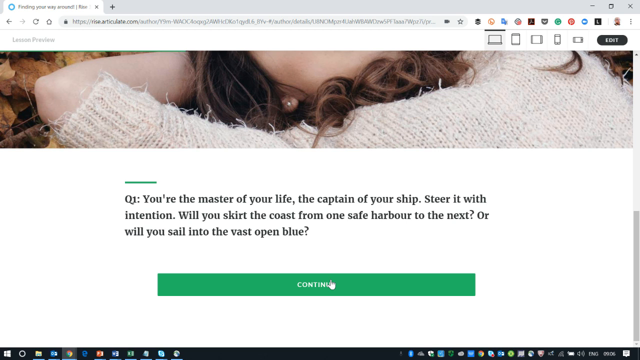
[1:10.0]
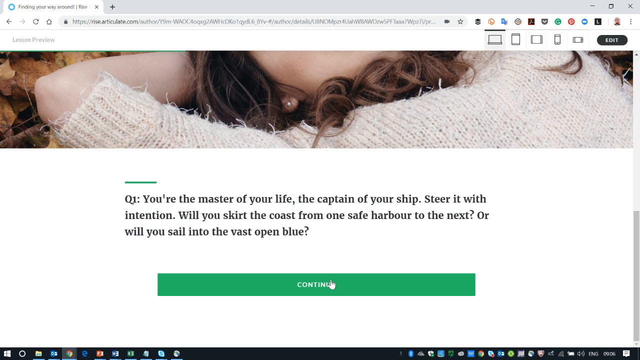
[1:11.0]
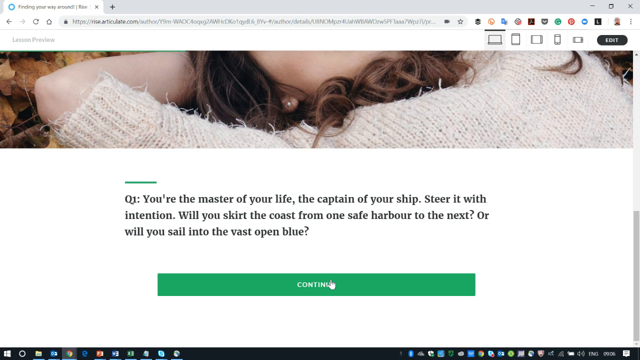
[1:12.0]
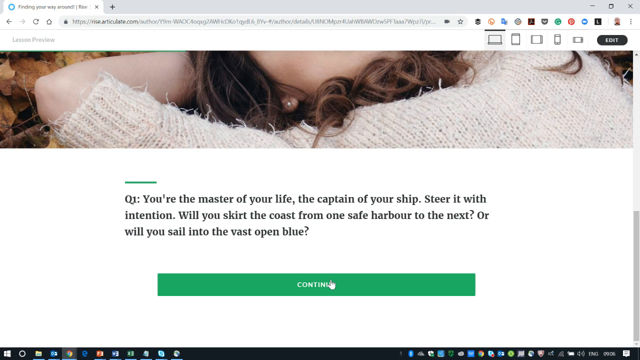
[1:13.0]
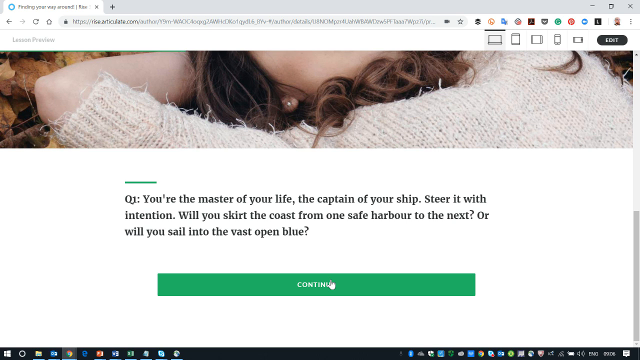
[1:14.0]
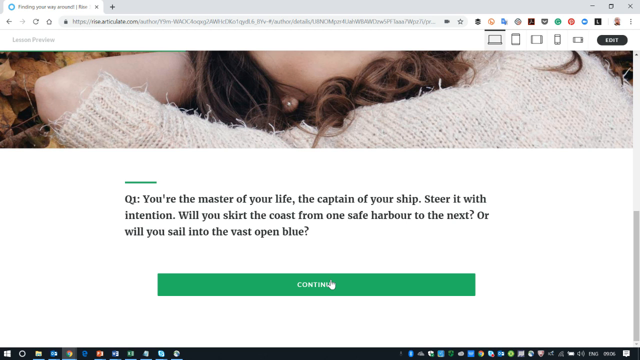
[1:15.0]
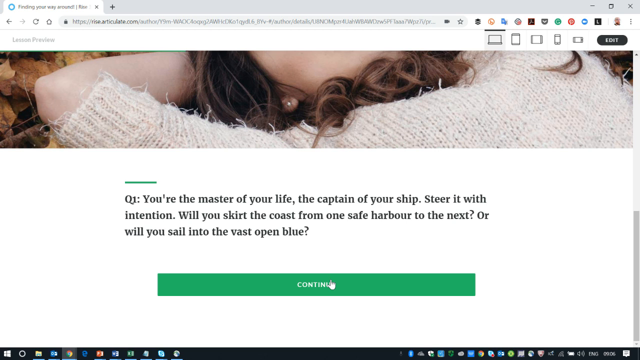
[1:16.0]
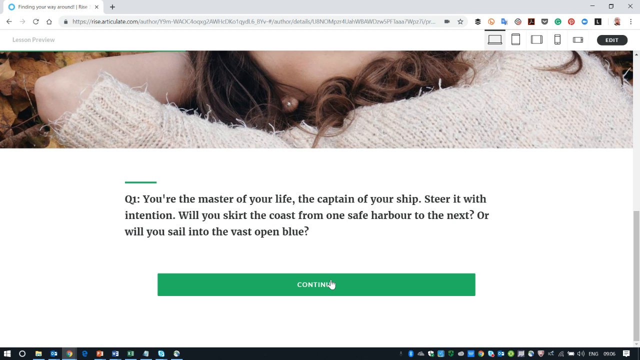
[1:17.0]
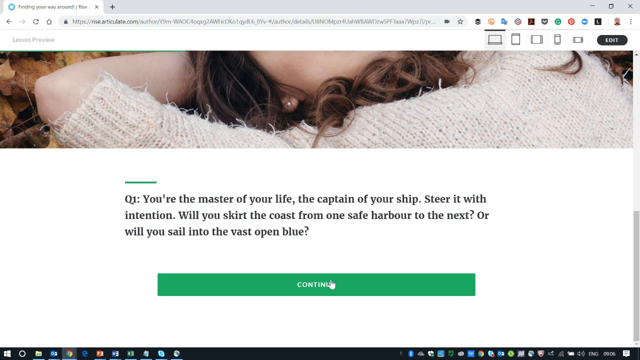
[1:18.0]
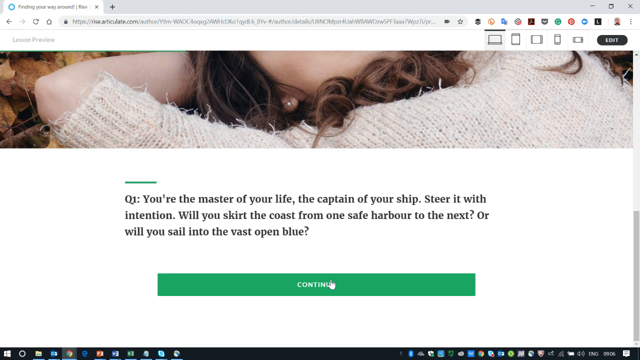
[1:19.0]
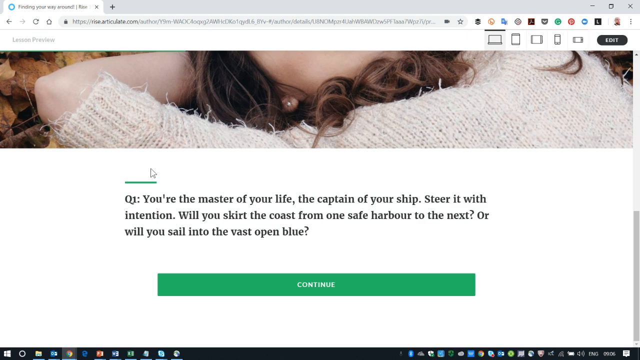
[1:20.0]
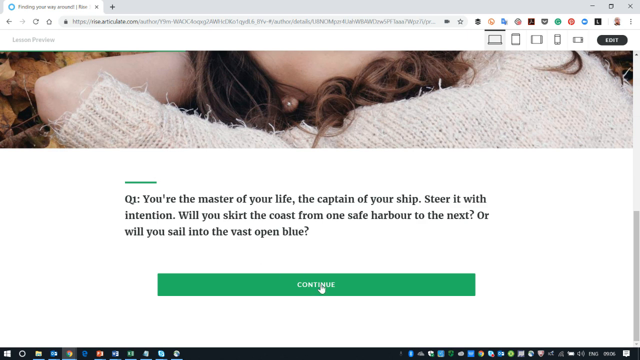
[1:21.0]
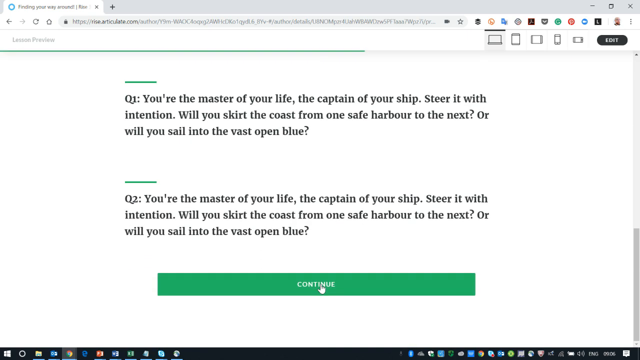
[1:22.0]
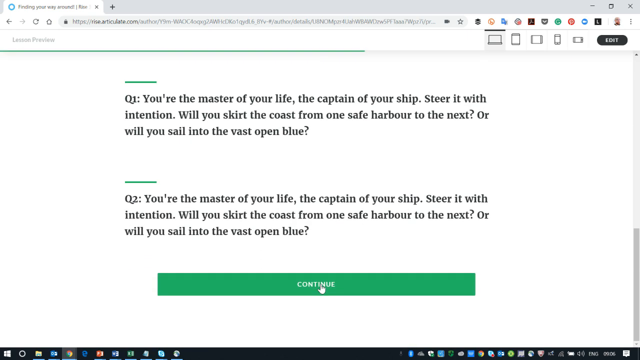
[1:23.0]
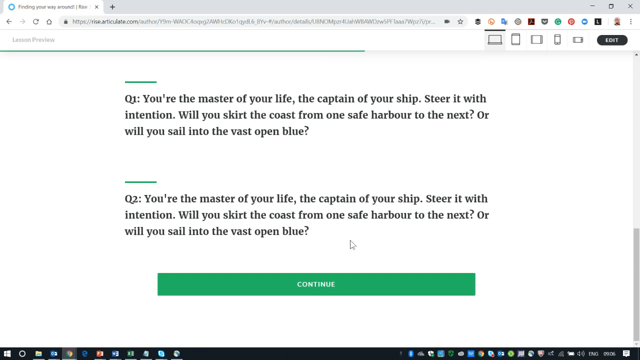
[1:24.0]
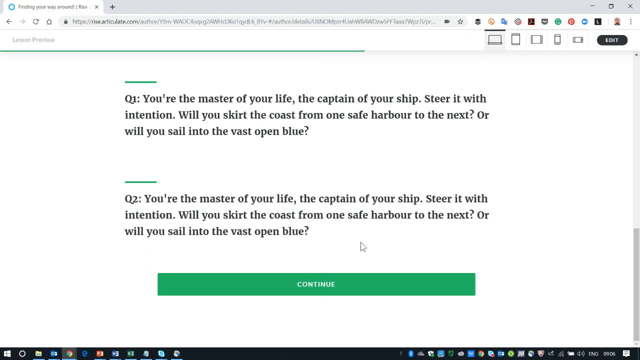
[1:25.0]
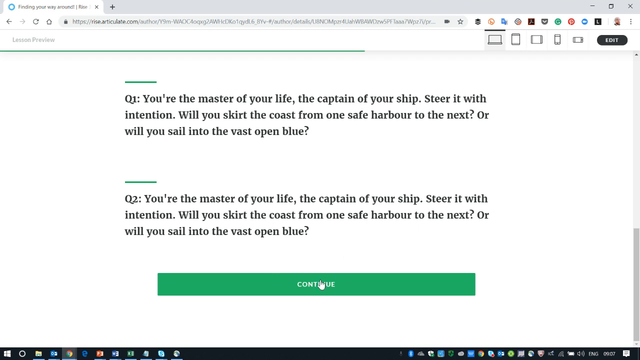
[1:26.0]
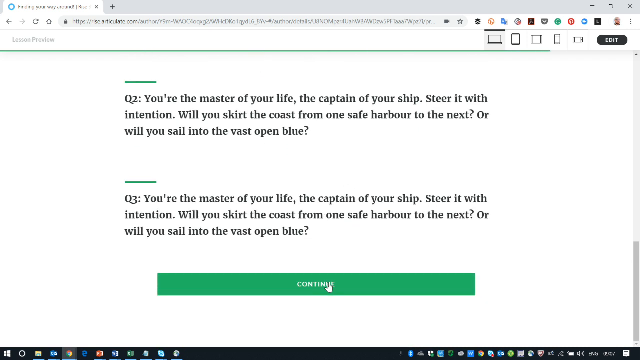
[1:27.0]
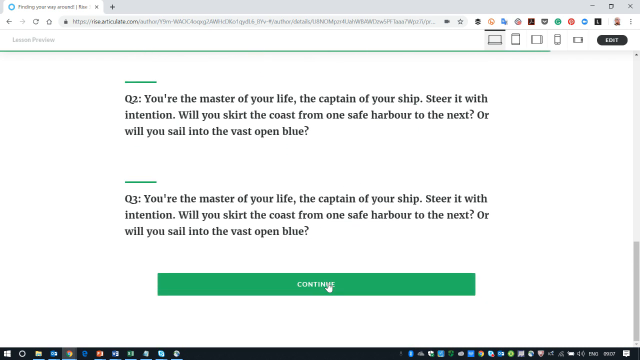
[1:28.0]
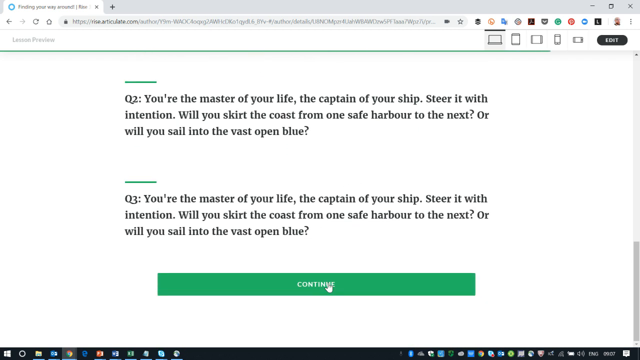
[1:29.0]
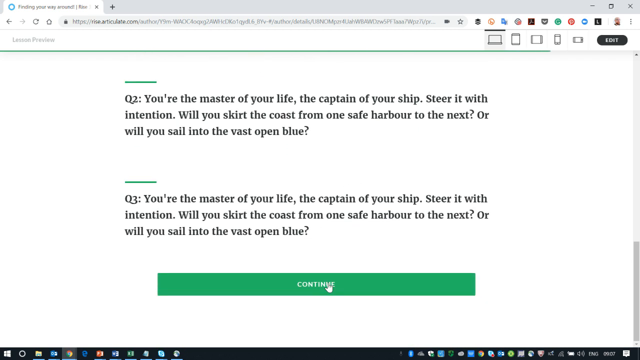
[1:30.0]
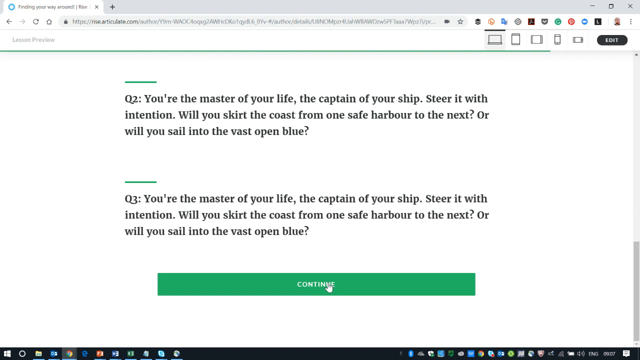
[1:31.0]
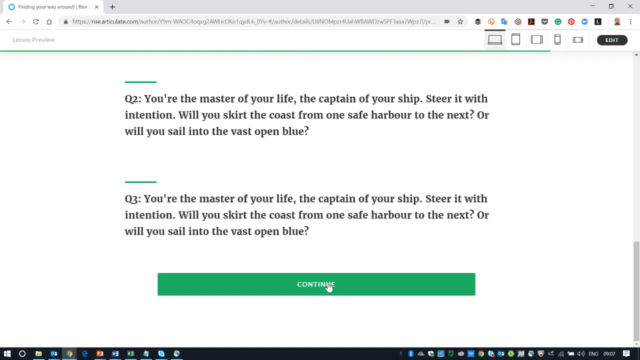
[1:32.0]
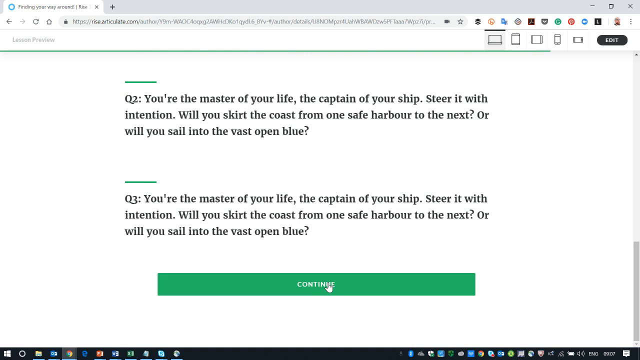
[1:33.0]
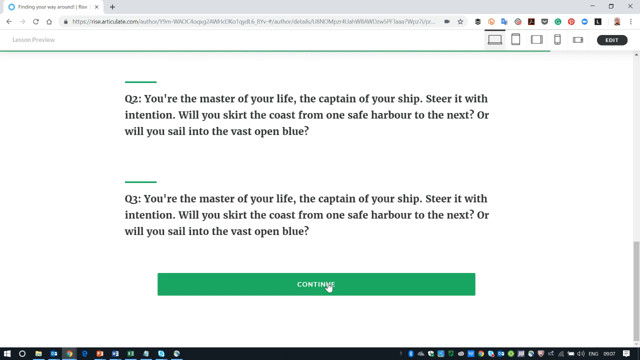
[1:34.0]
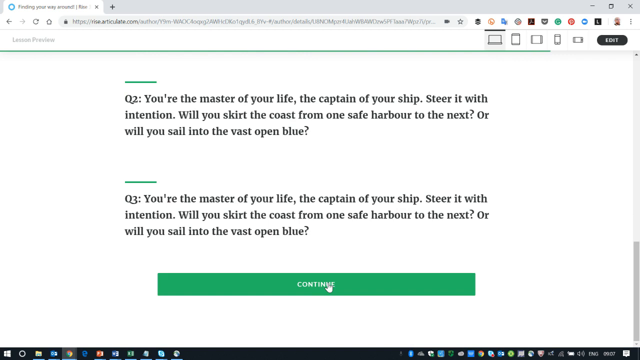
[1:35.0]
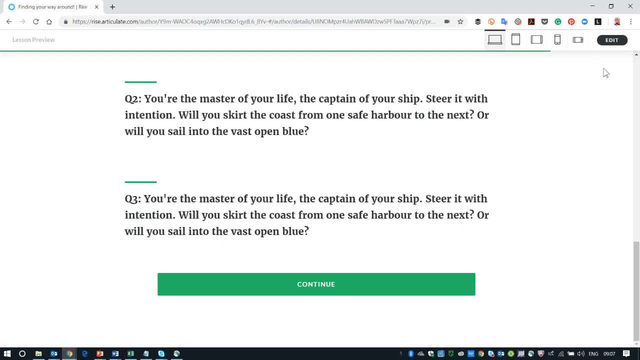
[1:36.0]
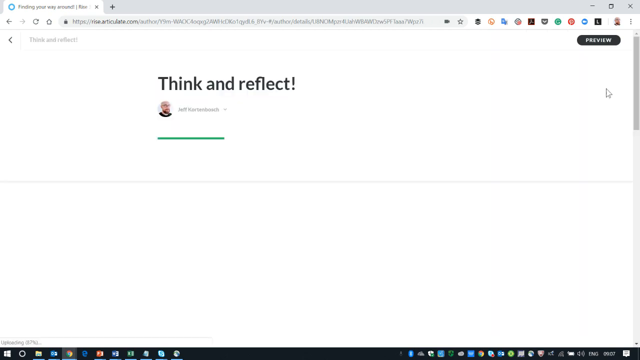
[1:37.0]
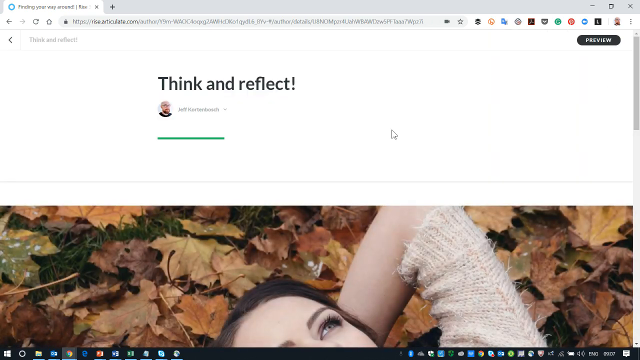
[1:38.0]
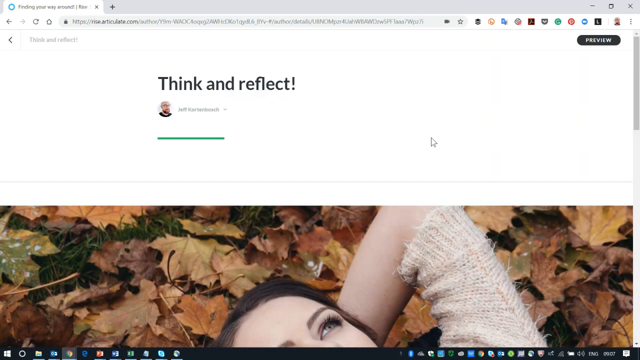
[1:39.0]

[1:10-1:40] The question "Steer it with intention. Will you skirt the coast from one safe harbor to the next? Or will you sail into the vast open blue?" is on screen, and continue is pressed. Question two shows the same text: "You are the master of your life, the captain of your ship. Steer it with intention. Will you skirt the coast from one safe harbor to the next? Or will you sail into the vast open blue?" Continuing to the third question, the same text appears again. He clicks continue, then navigates to edit and clicks it, and the label shifts from edit to preview.